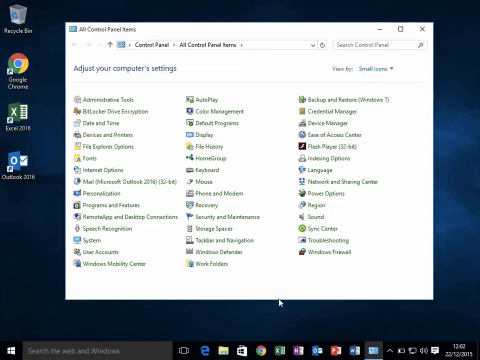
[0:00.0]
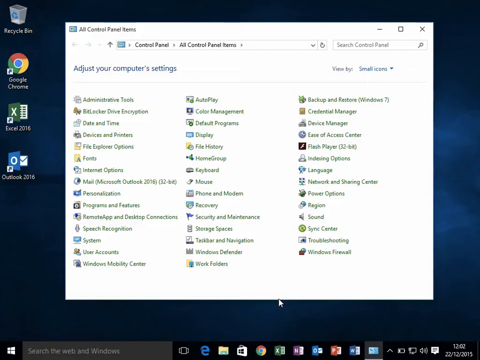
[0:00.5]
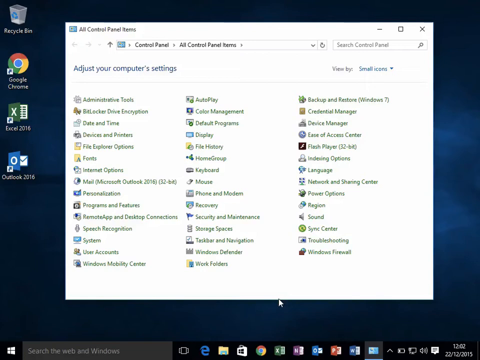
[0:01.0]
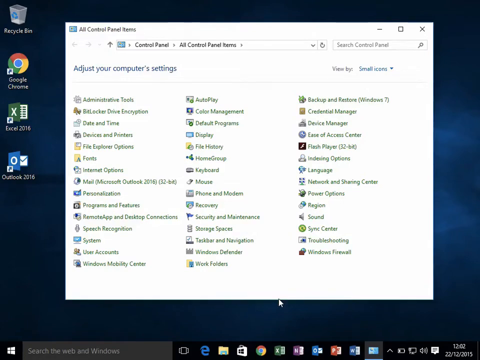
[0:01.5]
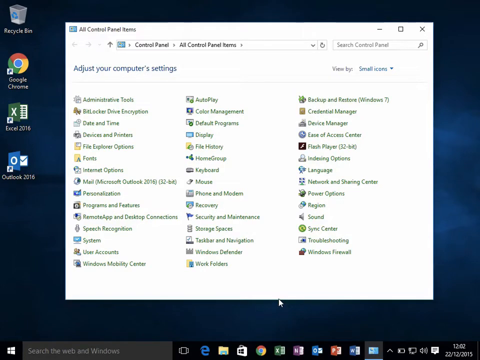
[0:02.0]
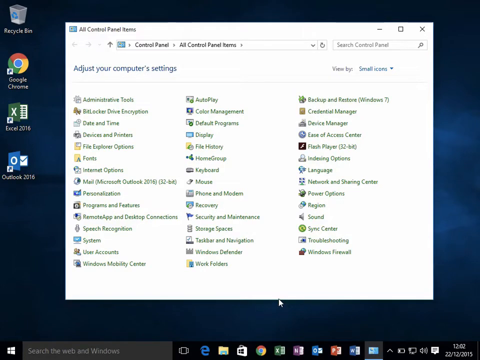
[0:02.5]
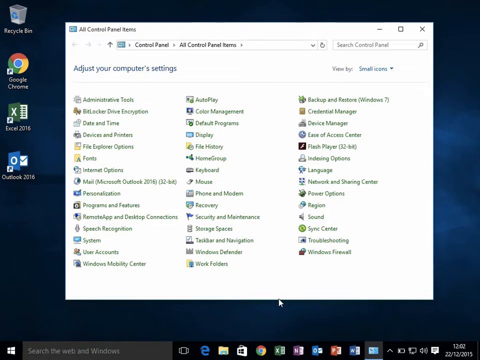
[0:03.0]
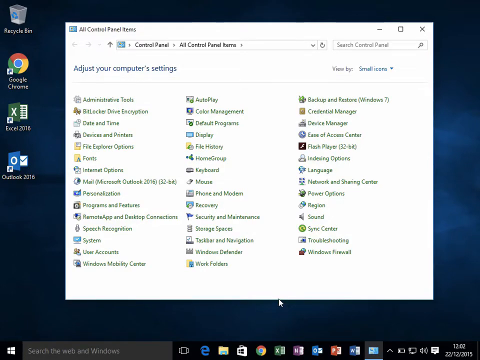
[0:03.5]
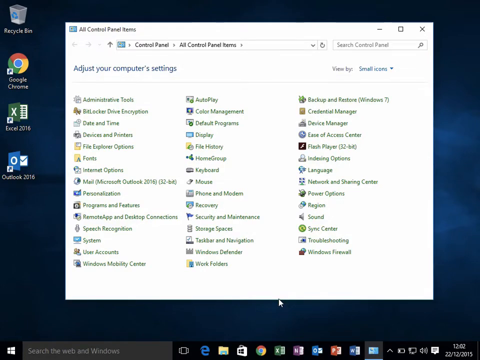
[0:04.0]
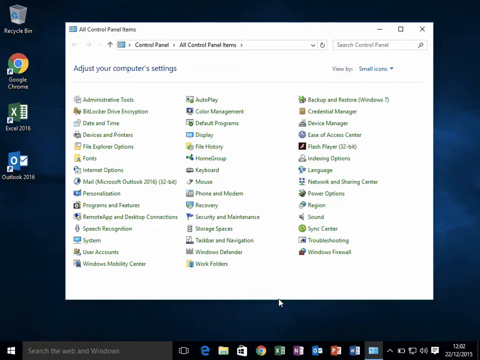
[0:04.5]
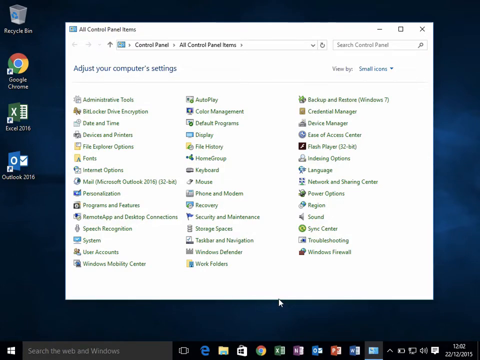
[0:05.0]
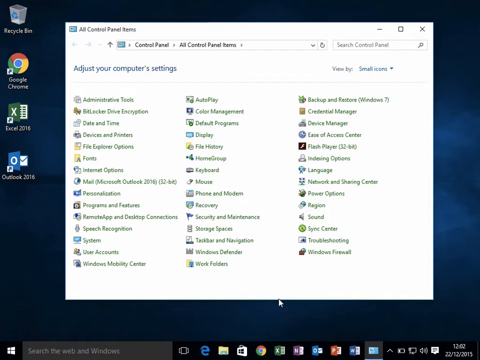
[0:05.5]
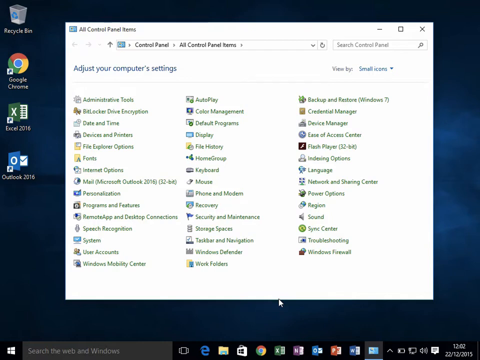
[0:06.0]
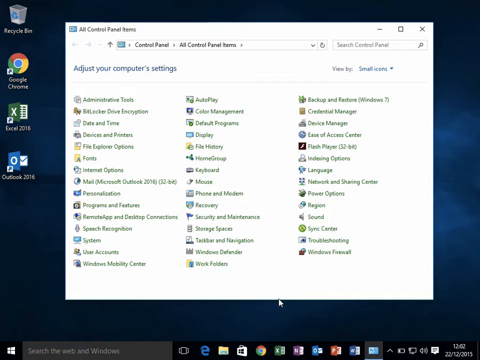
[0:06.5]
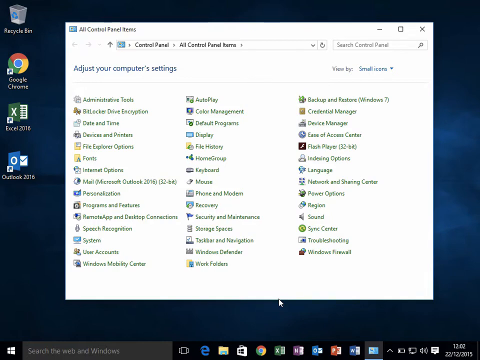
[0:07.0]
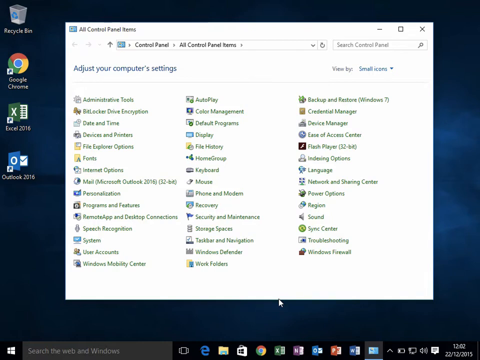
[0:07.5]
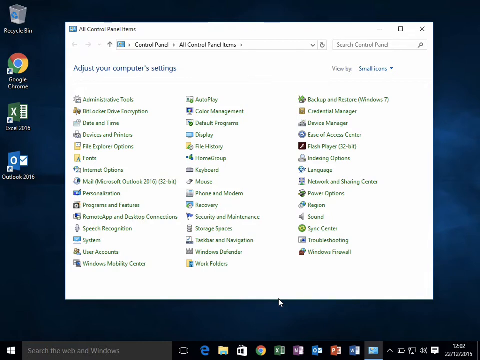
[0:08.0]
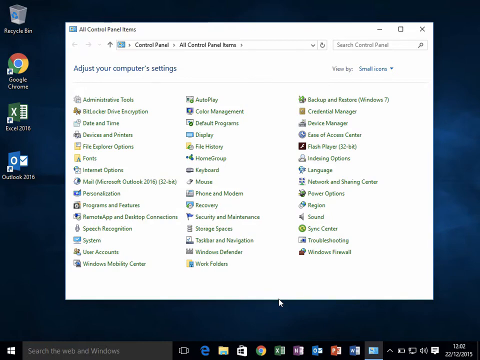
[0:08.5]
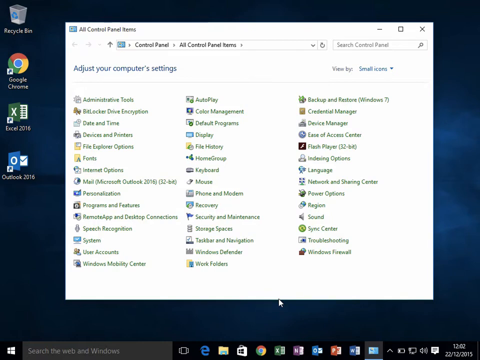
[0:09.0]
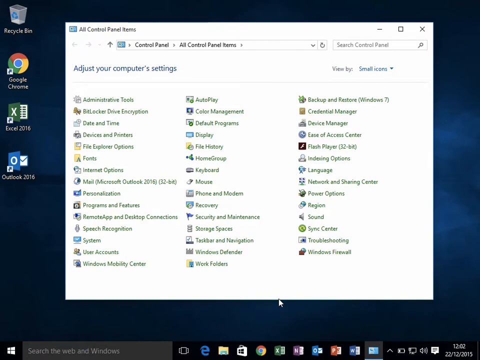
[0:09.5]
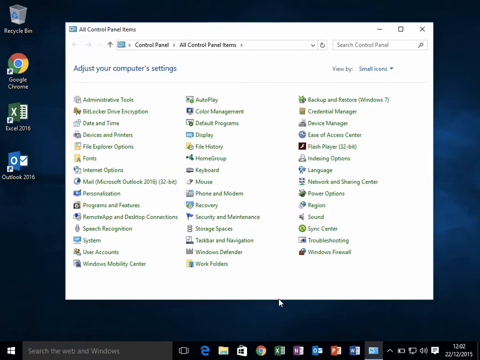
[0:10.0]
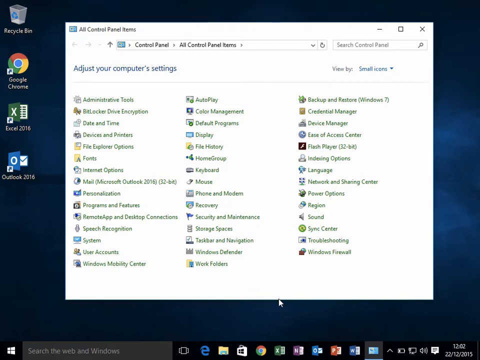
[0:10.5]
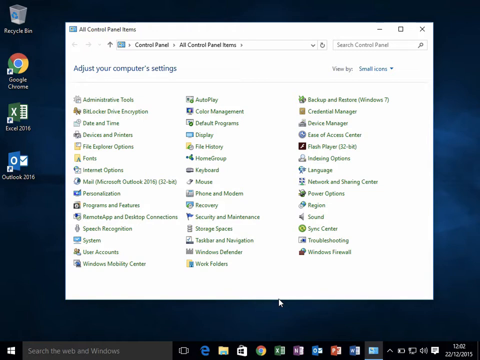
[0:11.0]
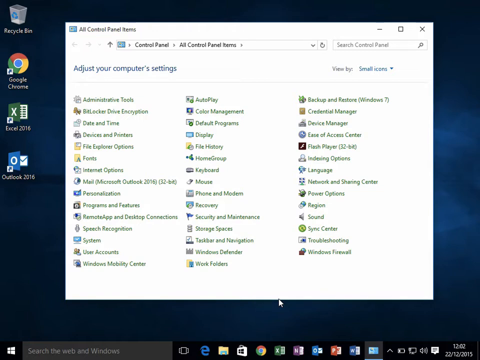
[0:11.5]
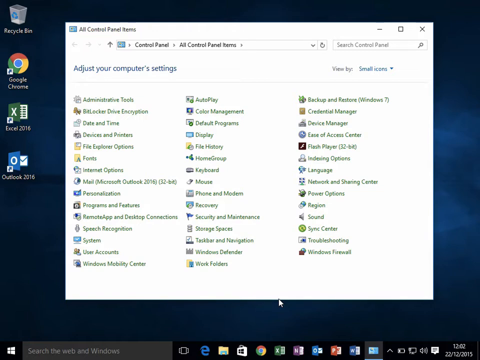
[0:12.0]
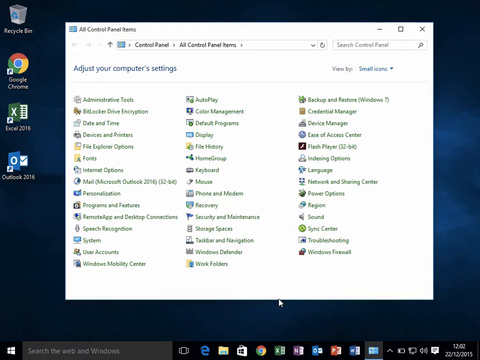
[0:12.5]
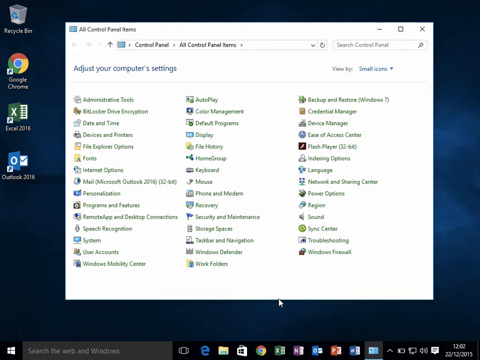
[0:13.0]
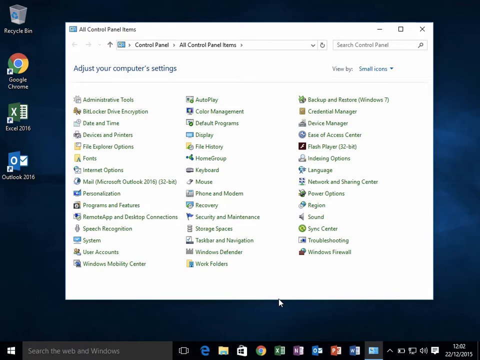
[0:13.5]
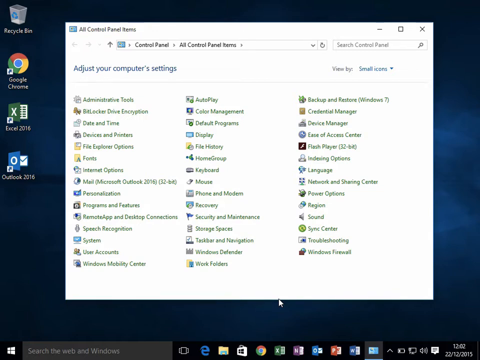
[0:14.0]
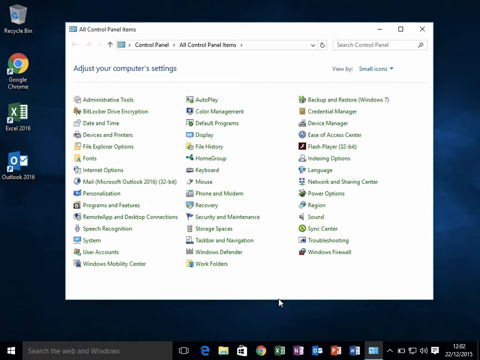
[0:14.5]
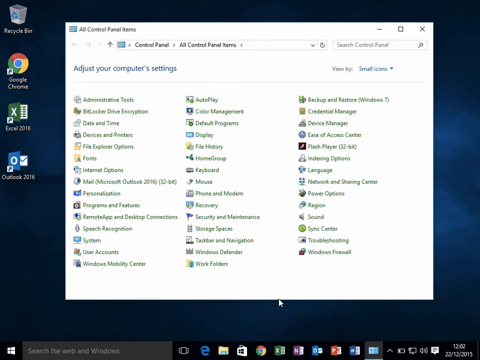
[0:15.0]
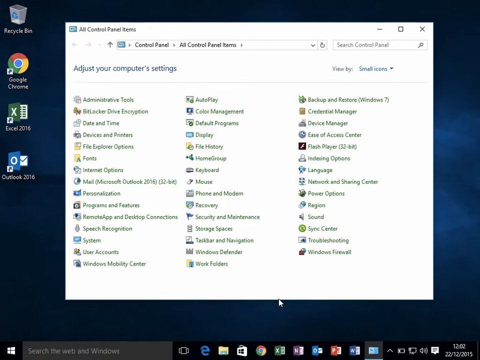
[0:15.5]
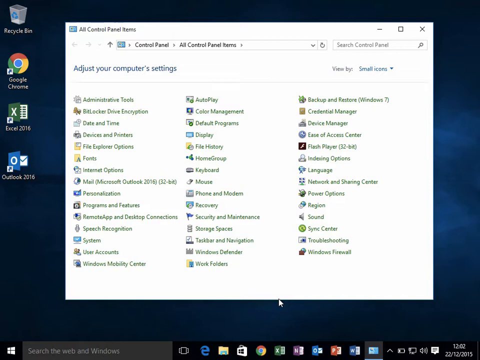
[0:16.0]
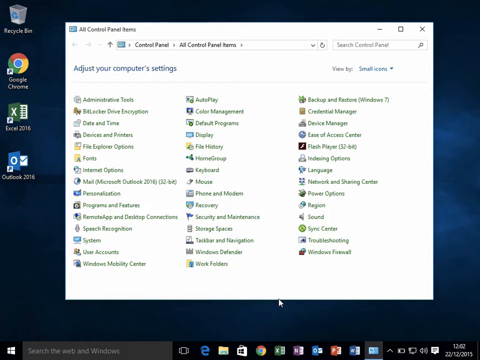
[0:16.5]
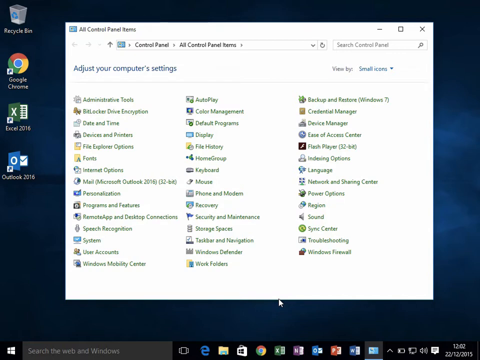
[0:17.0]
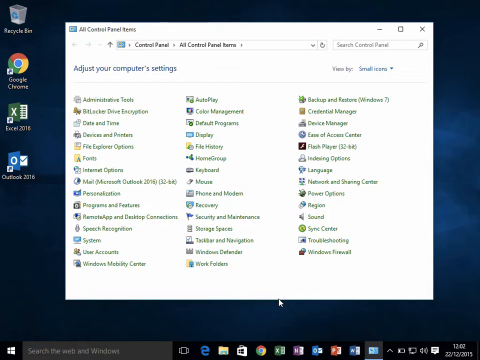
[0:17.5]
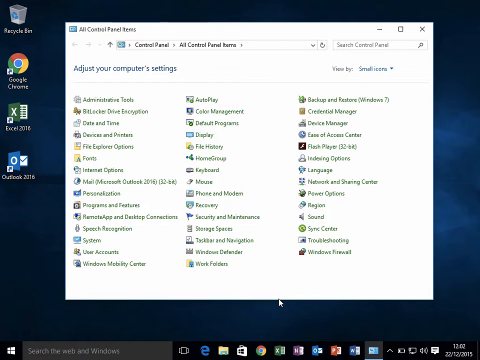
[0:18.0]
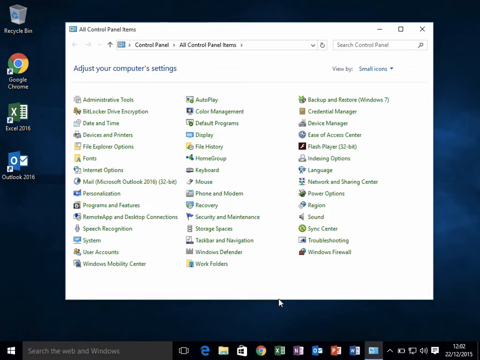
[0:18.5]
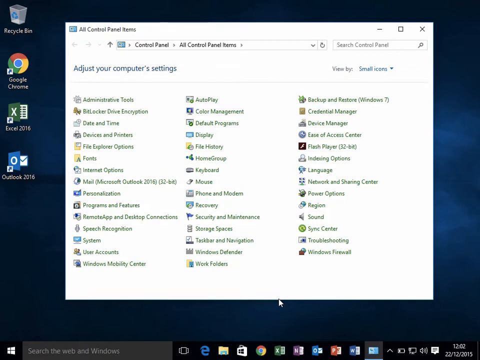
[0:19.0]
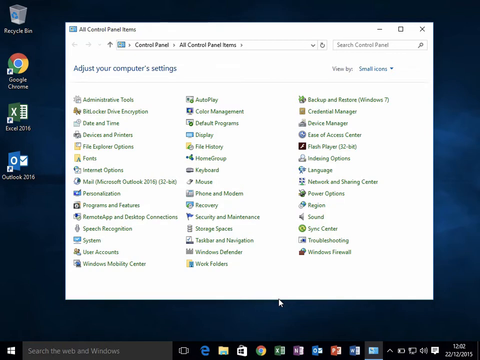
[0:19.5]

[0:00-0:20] The desktop of a Windows computer is shown, with the date December 22, 2015 in the bottom right corner. Four icons are on the left side of the desktop: the Recycle Bin in the top left corner, Google Chrome below it, Excel 2016 underneath that, and Outlook 2016 at the bottom. In the center, a control panel window is open, with three rows of different buttons to select. The desktop behind the window is a very dark blue color, and the taskbar at the bottom holds many small program icons.